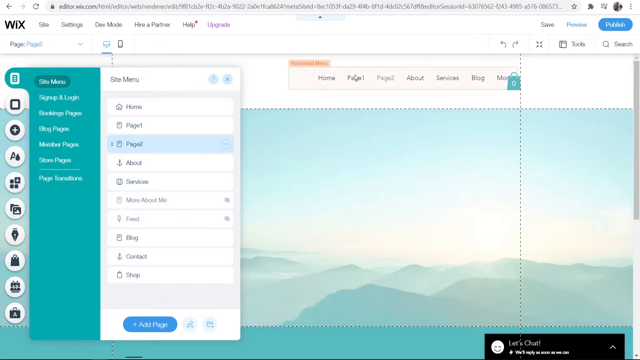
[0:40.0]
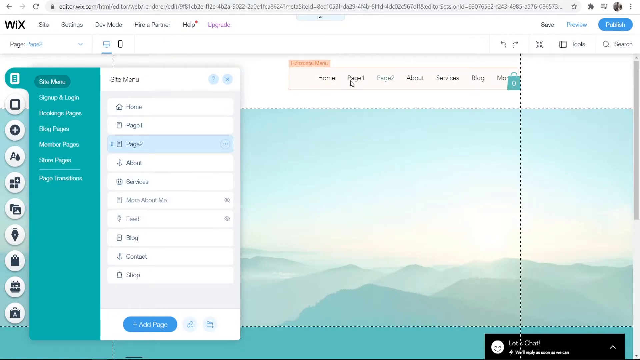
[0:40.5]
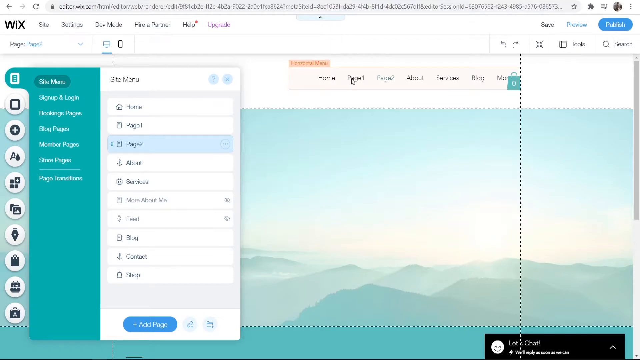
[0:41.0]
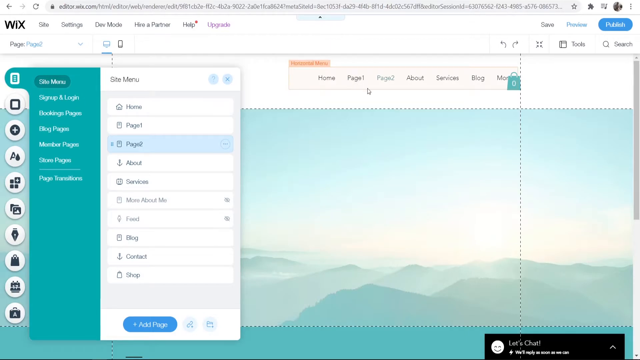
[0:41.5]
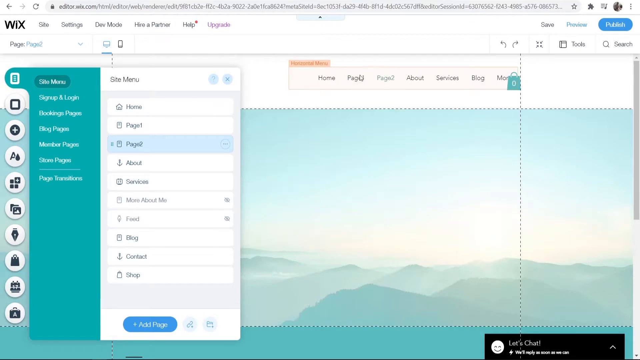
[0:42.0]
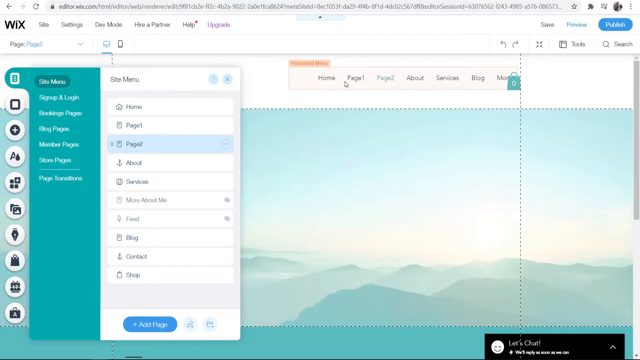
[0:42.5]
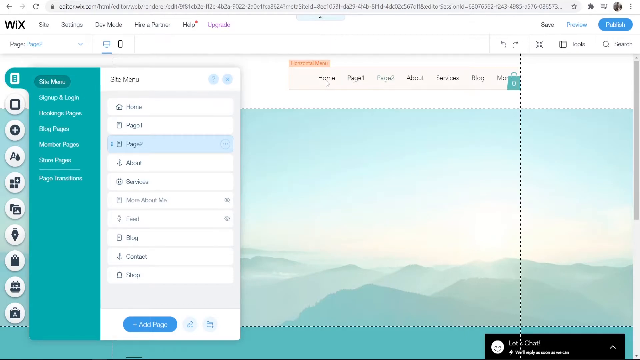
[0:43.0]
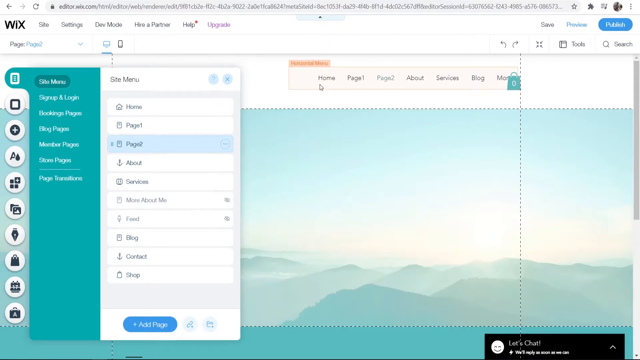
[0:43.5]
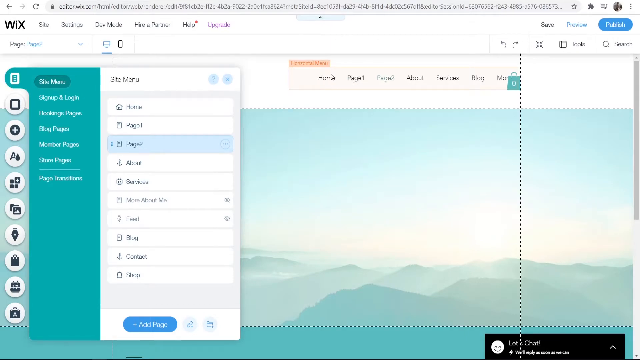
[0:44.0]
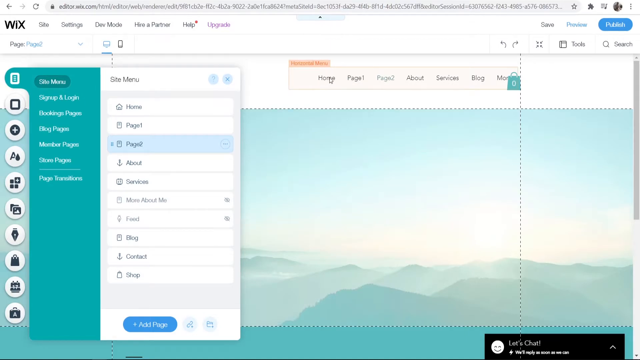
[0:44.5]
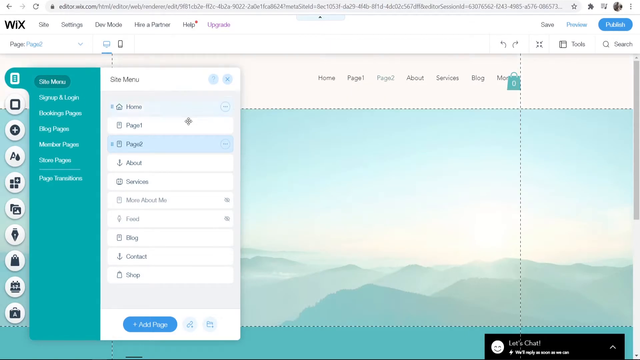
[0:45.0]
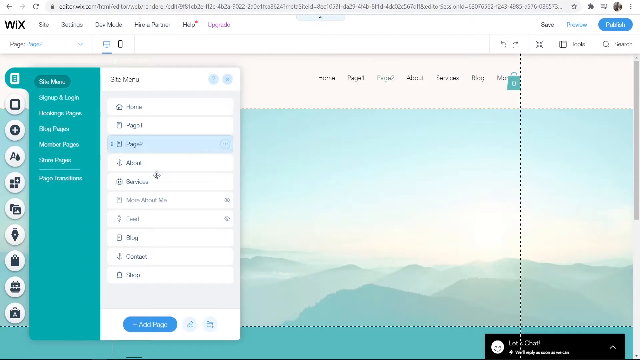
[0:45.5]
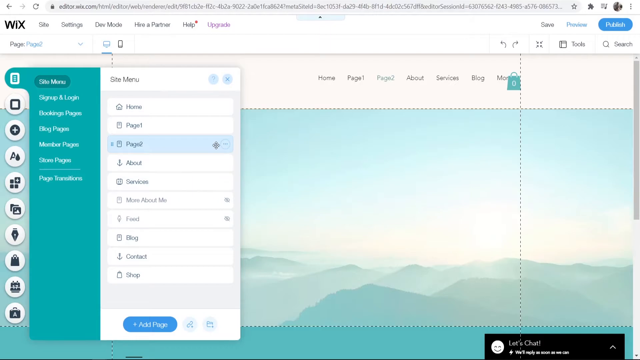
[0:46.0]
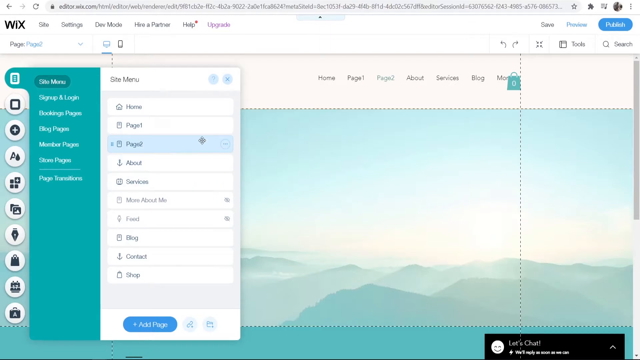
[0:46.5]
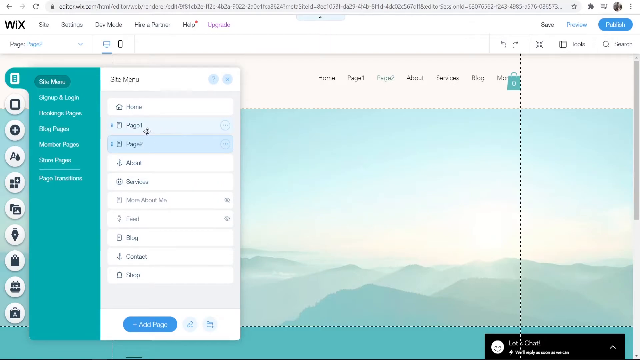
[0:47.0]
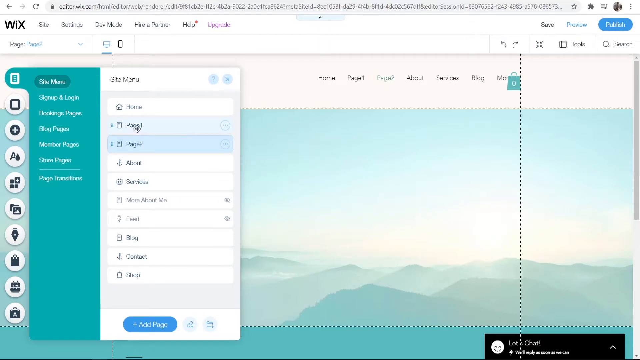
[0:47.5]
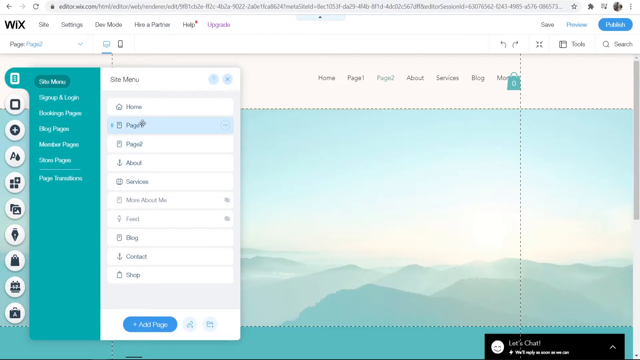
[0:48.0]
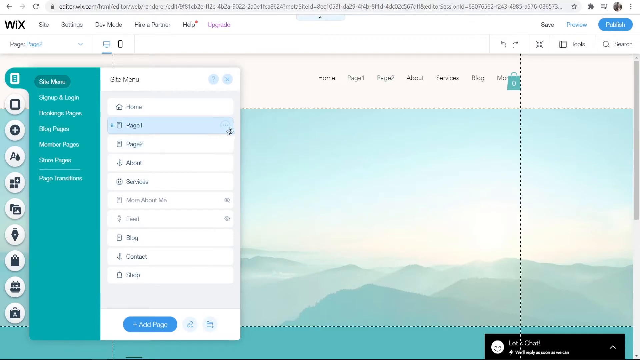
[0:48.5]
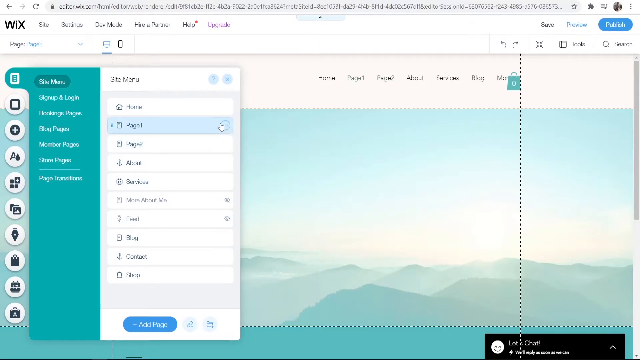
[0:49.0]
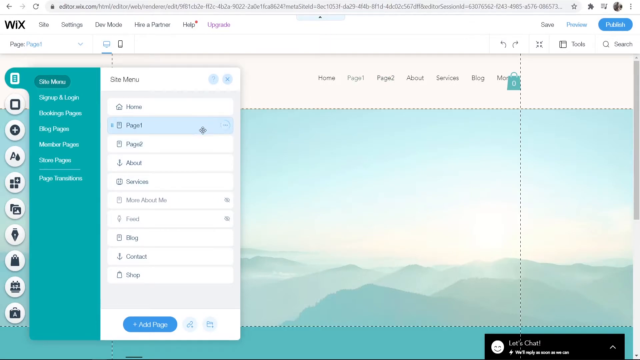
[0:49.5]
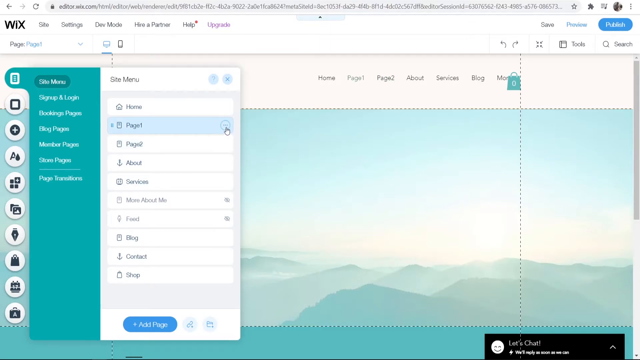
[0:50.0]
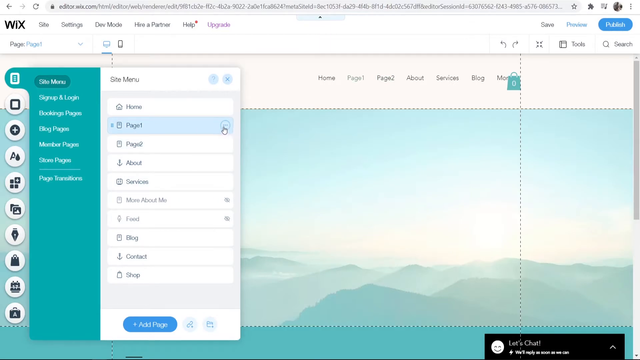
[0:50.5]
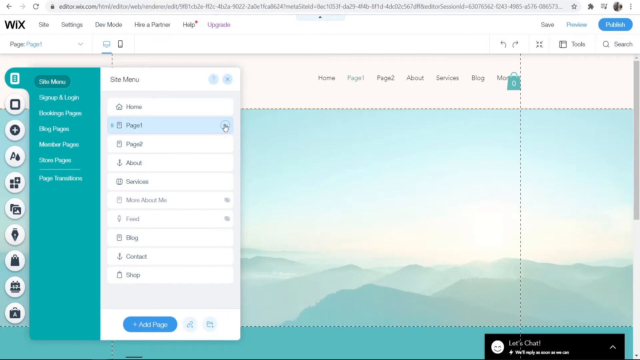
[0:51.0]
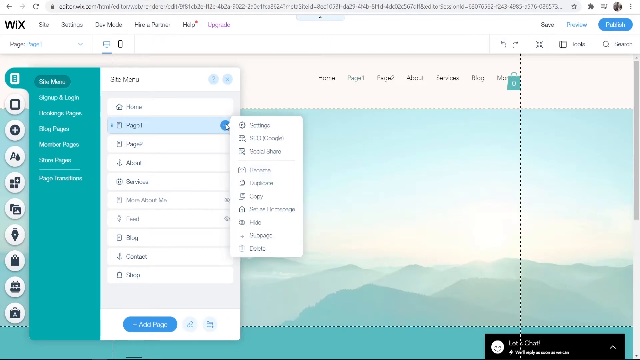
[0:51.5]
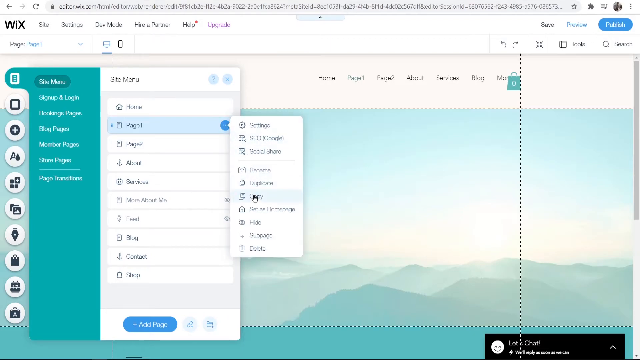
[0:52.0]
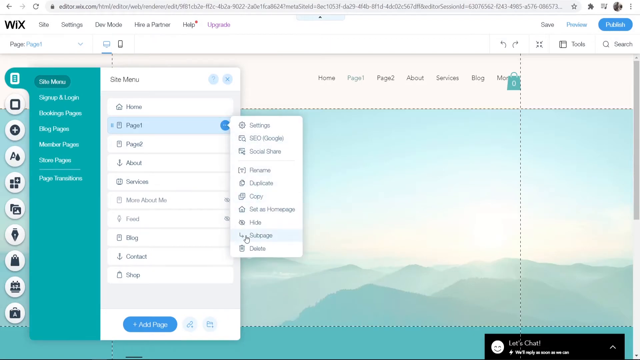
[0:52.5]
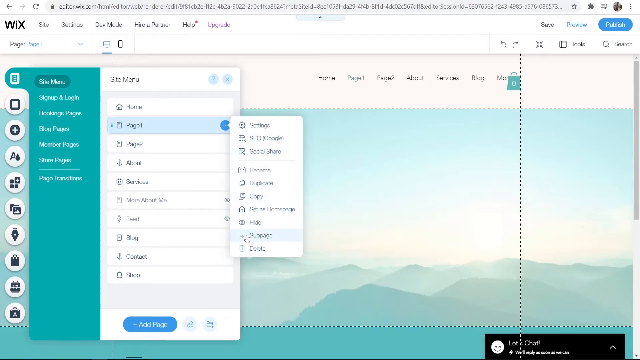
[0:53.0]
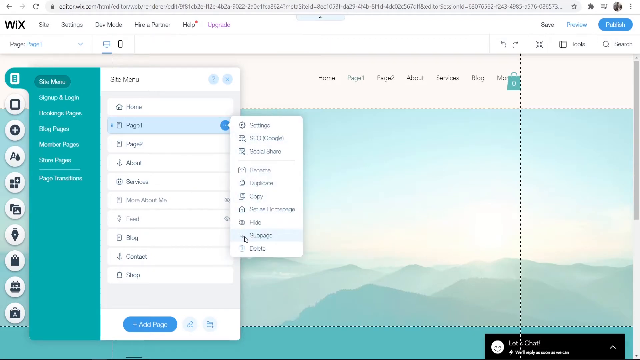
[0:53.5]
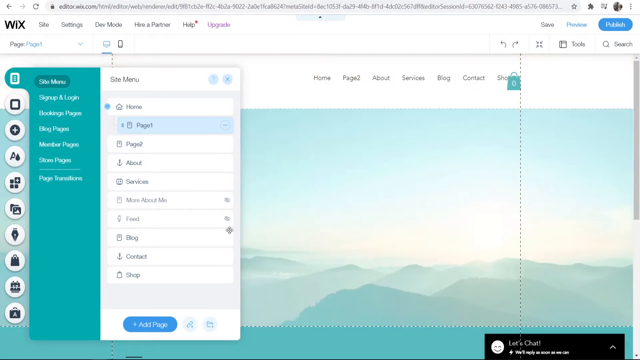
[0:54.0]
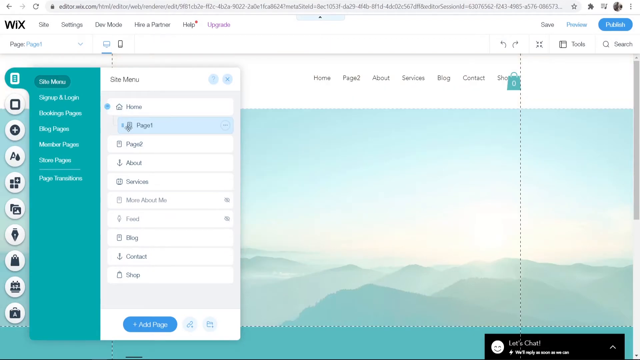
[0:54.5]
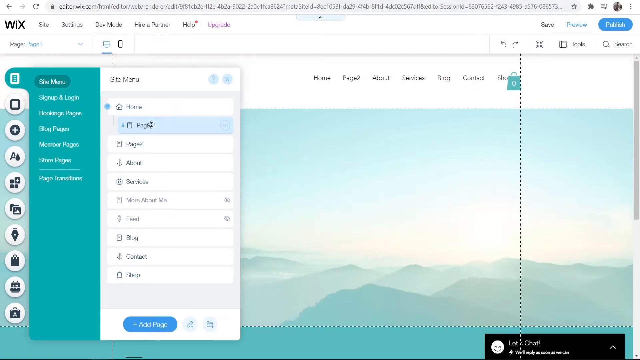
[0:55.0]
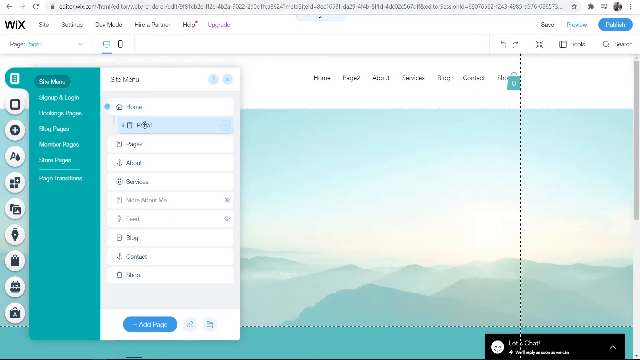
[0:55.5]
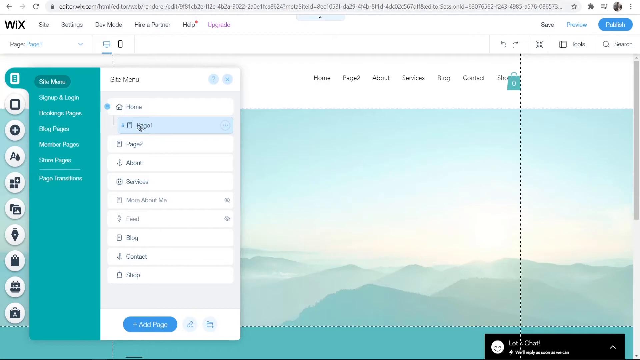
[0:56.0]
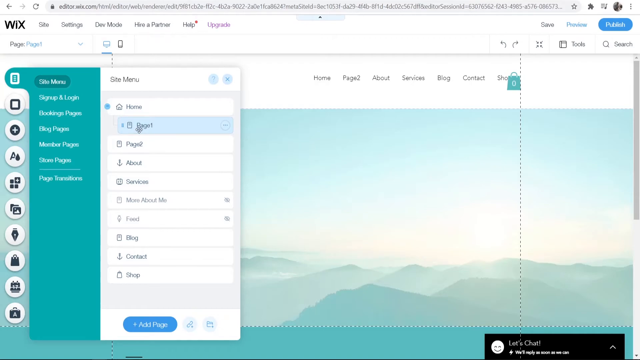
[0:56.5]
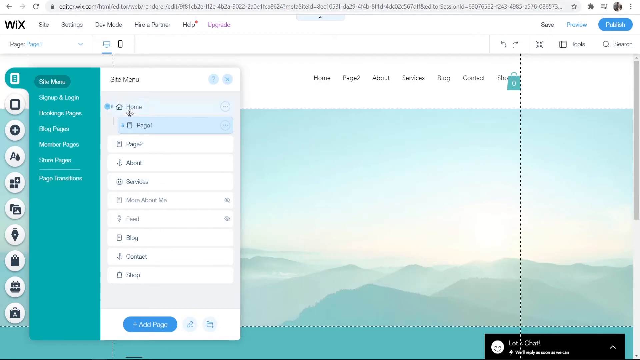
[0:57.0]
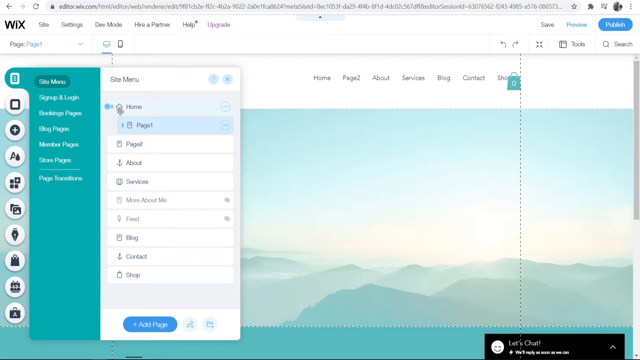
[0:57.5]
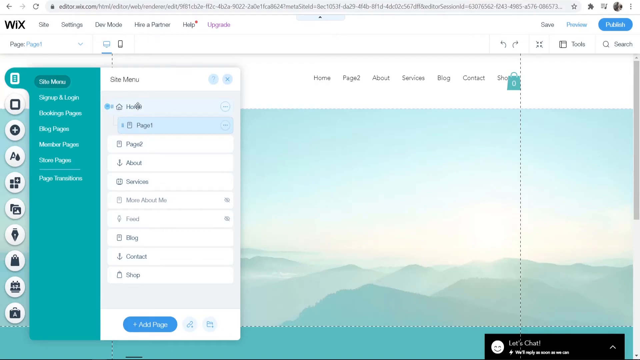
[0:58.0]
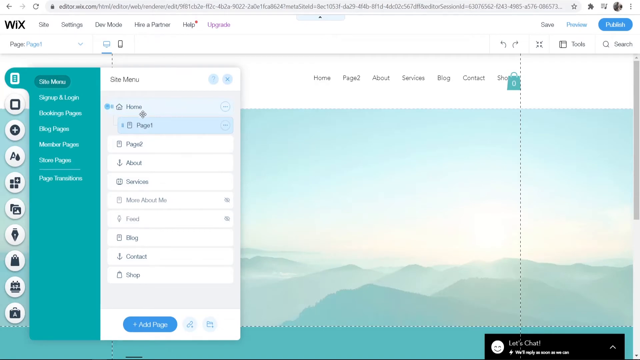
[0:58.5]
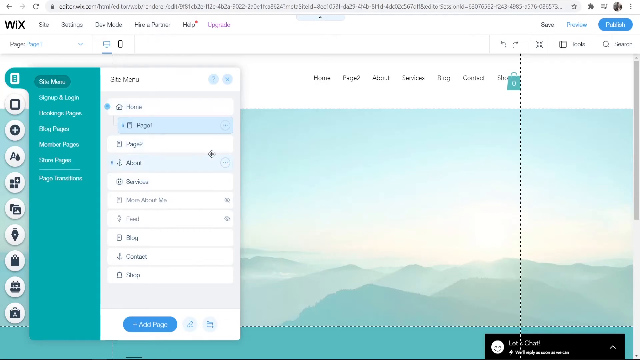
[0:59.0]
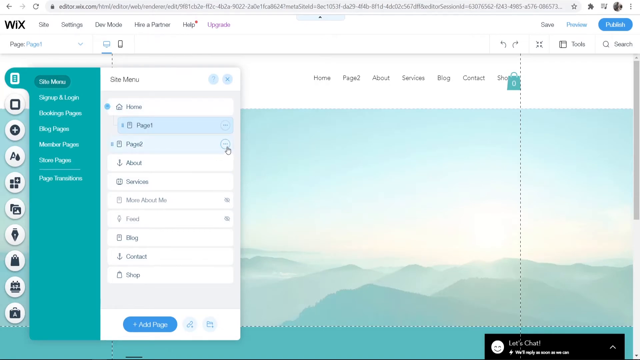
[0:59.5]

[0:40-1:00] The cursor moves slightly to the right and up to the white banner at the top, which lists home, page 1, page 2 and so forth. The cursor then moves back to the site menu, where it goes to page 1 and selects it, then moves on to page 2 and selects it. On page one they click the three arrows and hit subscribe; the cursor circles around, goes back up to home, then back down to page two and repeats the process, selecting the three dots beside page two and hitting subscribe. The background has changed from the mountain peaks to a view just above the clouds where some mountain peaks are visible, though not as many as before. Various different settings are shown.